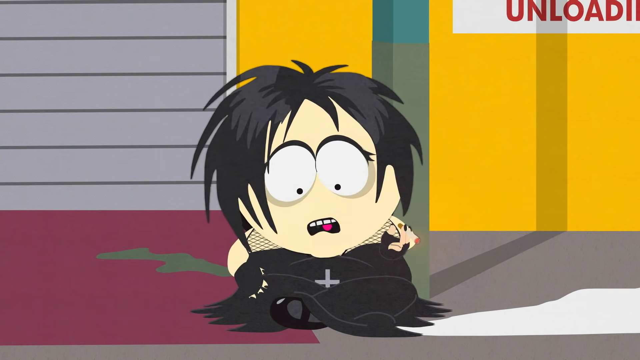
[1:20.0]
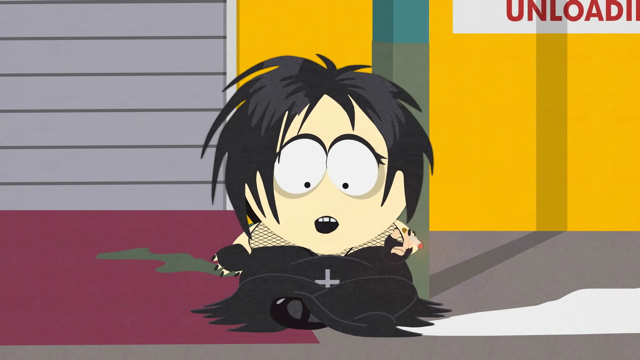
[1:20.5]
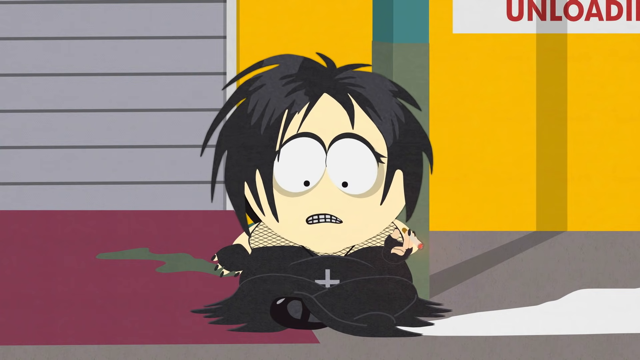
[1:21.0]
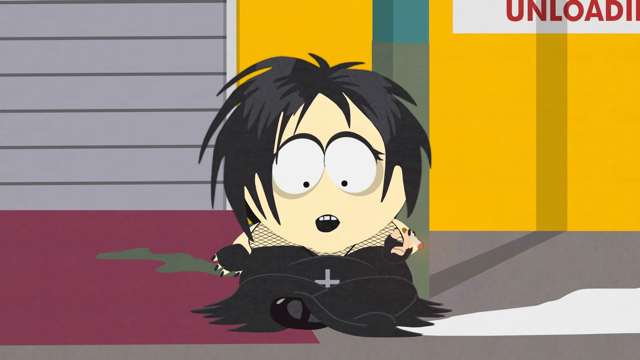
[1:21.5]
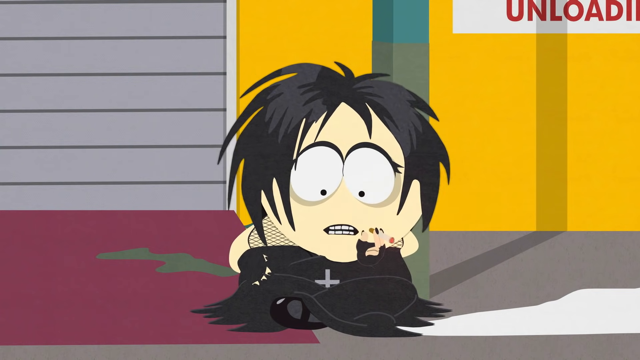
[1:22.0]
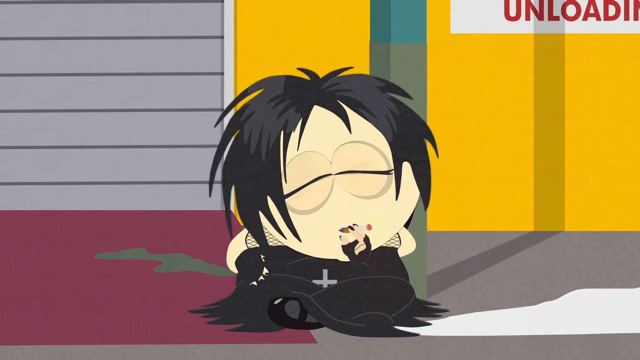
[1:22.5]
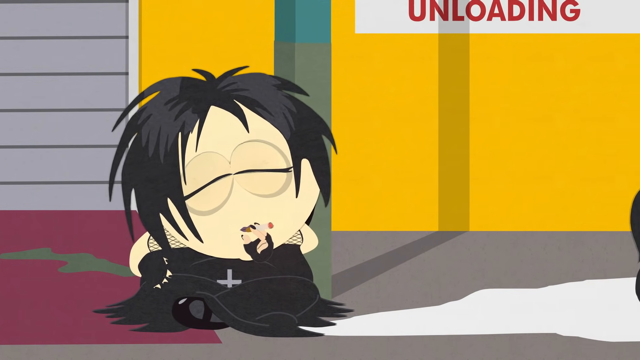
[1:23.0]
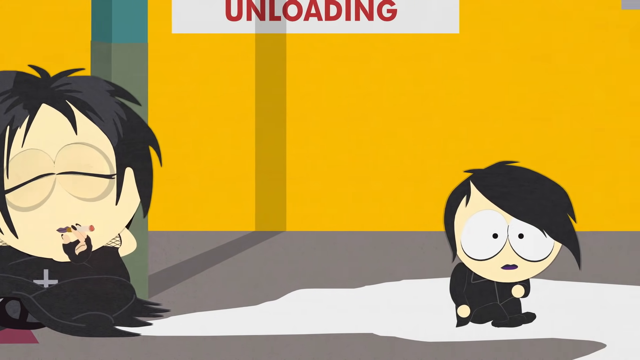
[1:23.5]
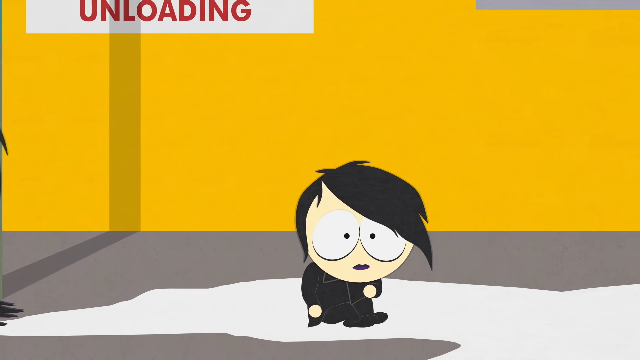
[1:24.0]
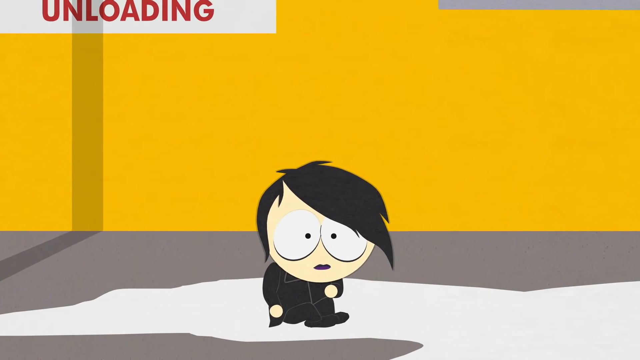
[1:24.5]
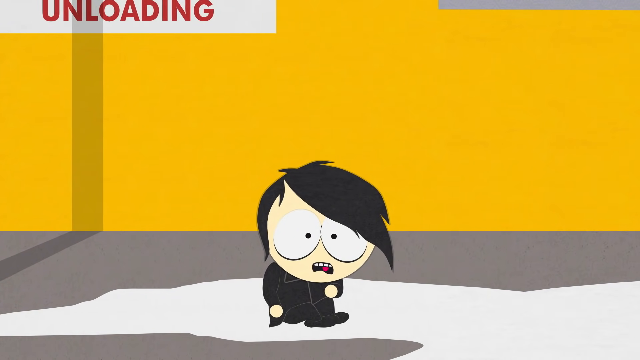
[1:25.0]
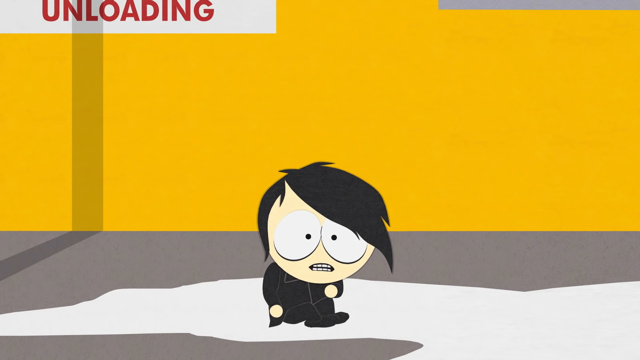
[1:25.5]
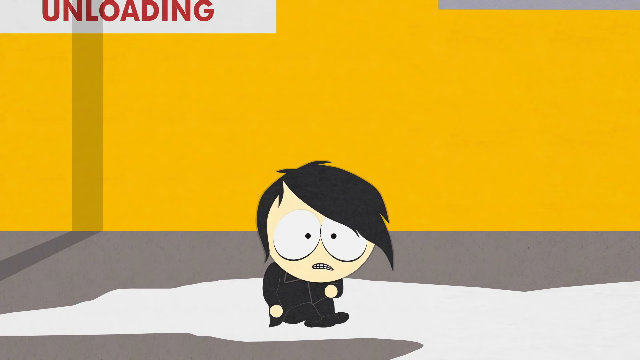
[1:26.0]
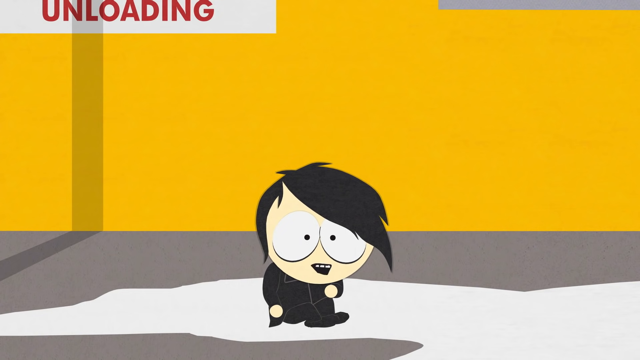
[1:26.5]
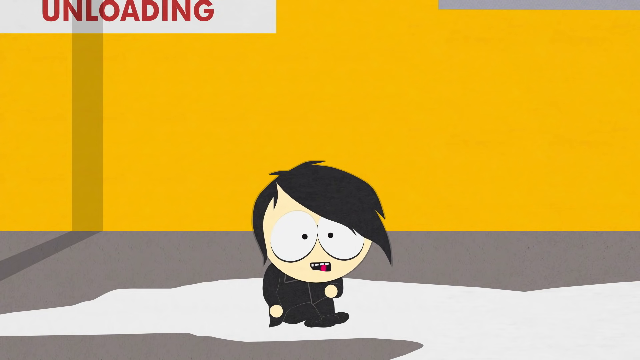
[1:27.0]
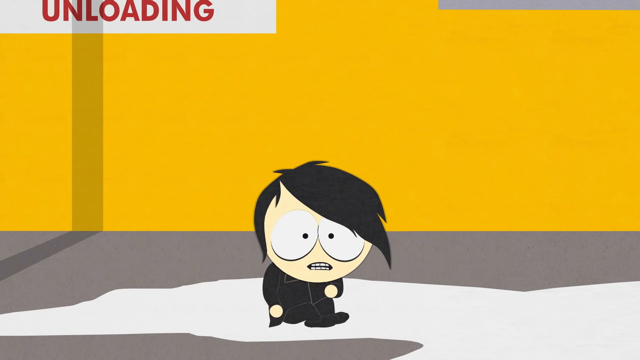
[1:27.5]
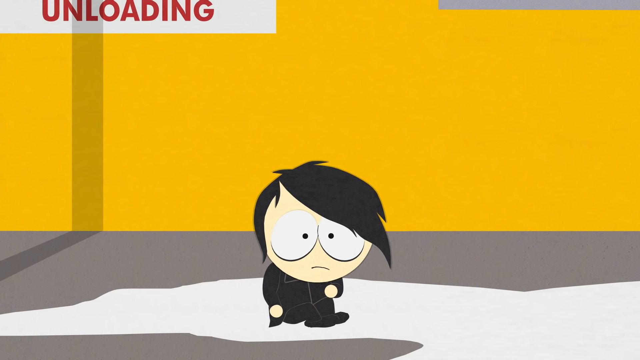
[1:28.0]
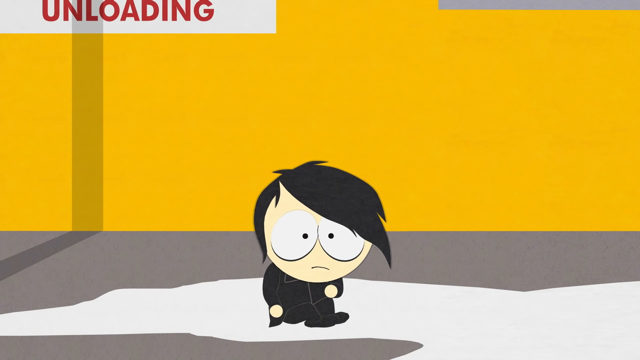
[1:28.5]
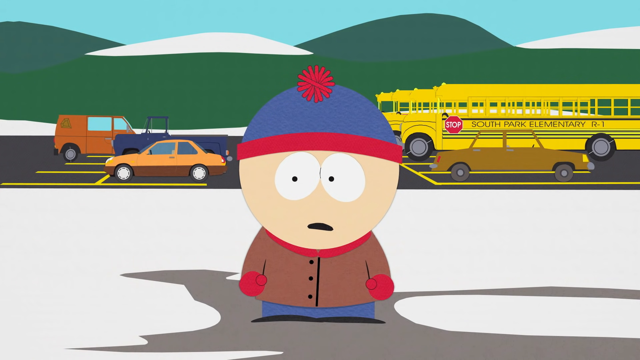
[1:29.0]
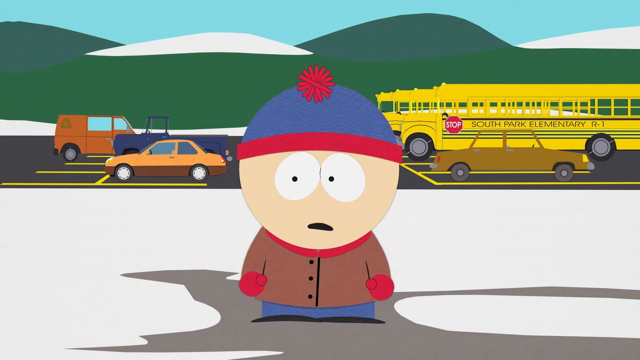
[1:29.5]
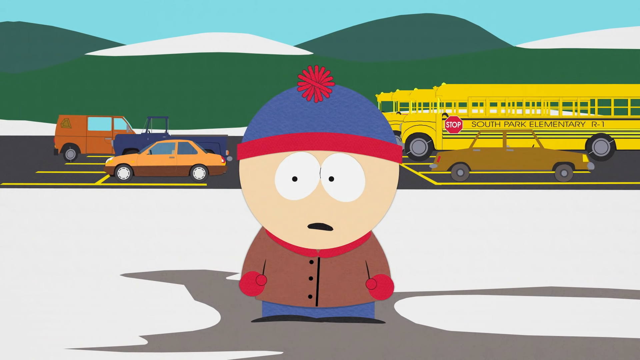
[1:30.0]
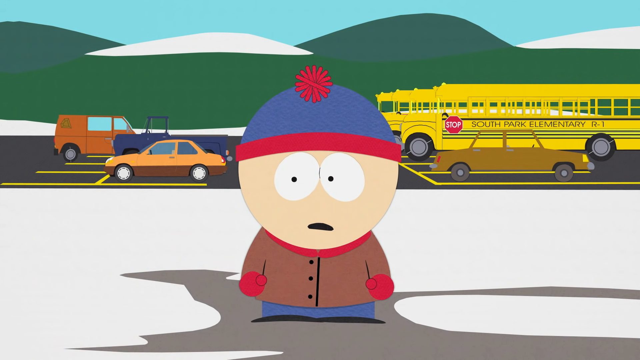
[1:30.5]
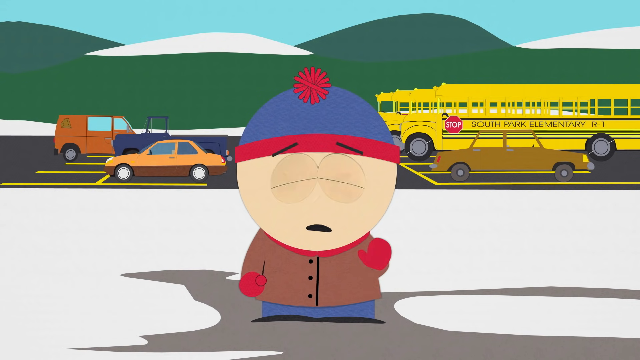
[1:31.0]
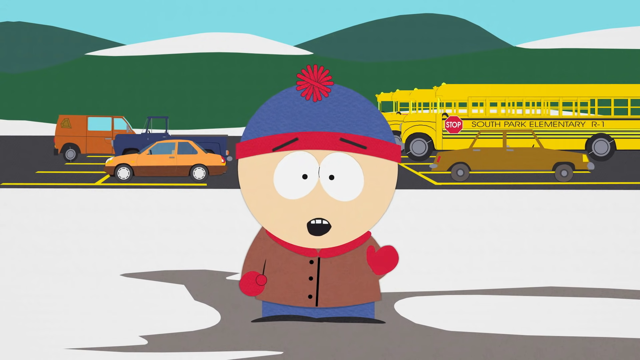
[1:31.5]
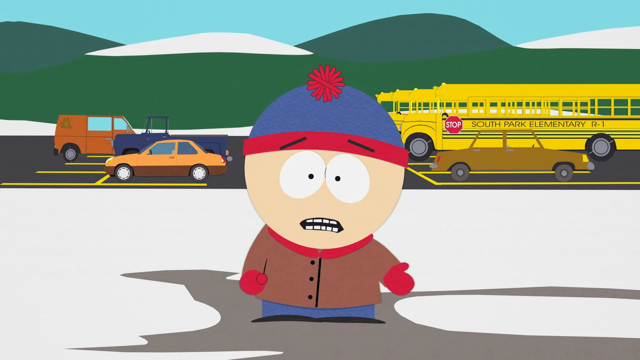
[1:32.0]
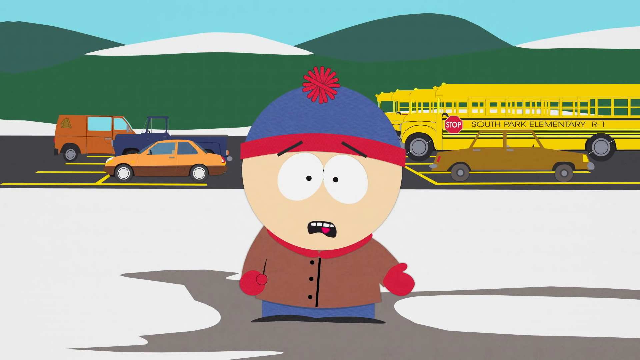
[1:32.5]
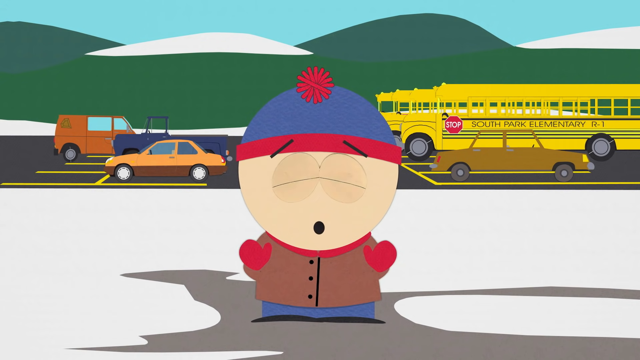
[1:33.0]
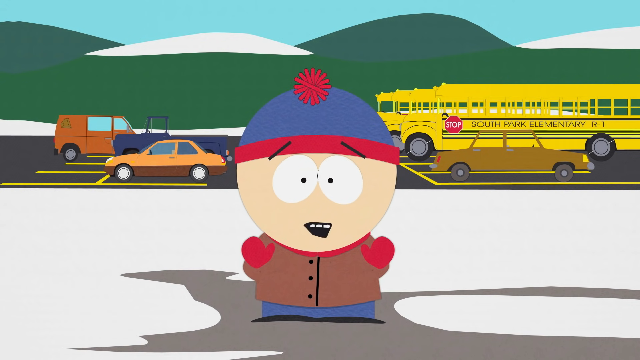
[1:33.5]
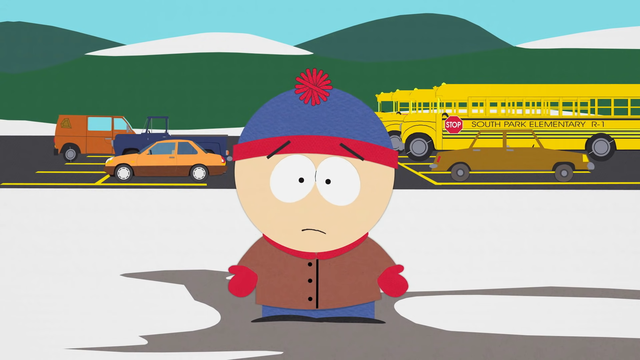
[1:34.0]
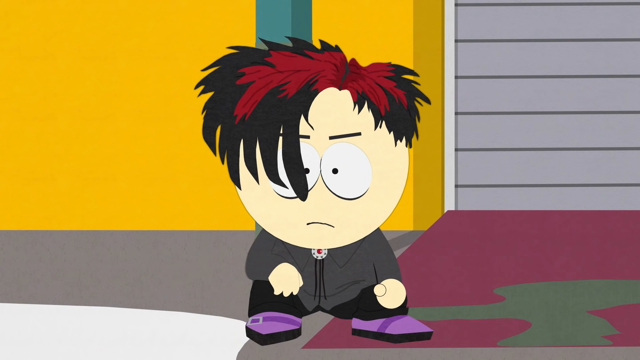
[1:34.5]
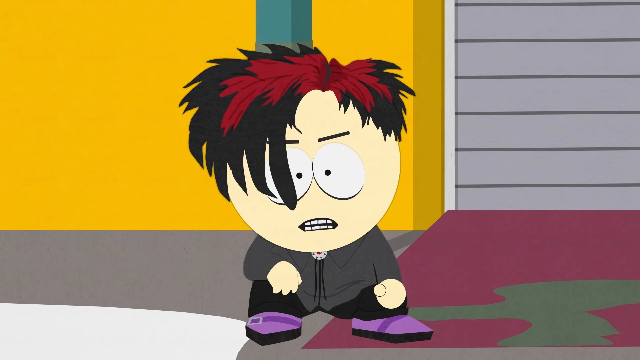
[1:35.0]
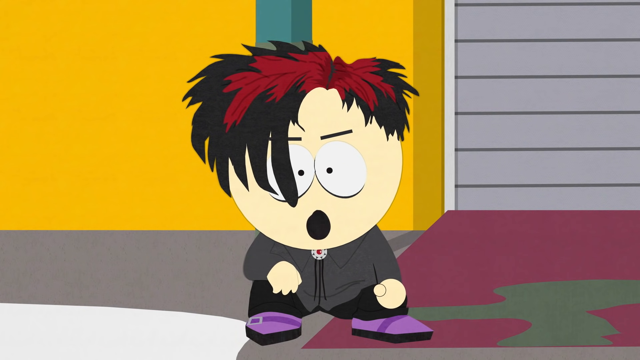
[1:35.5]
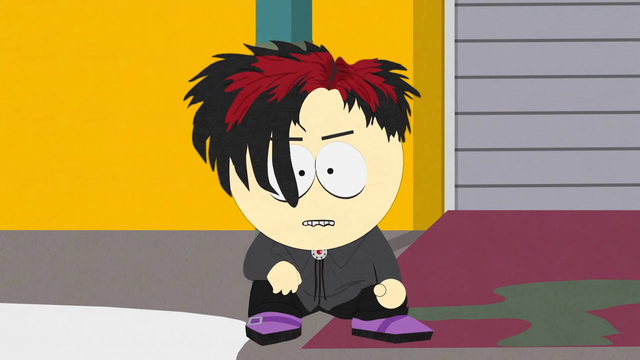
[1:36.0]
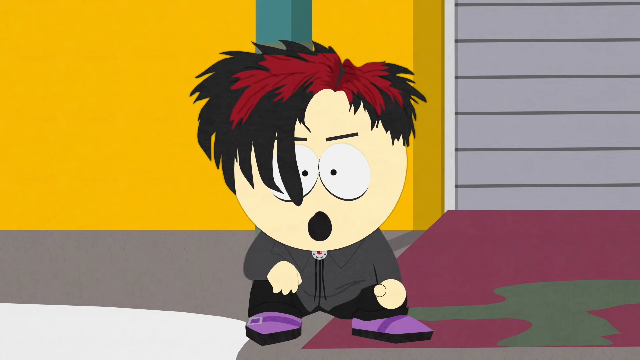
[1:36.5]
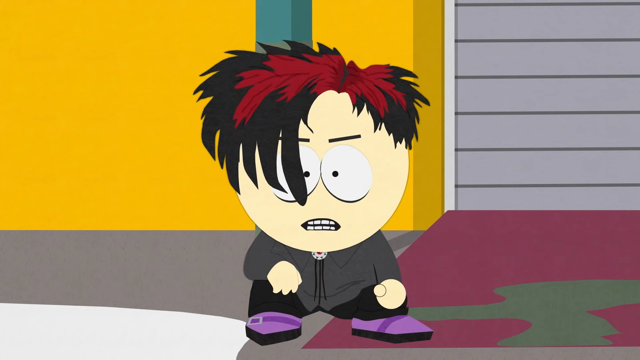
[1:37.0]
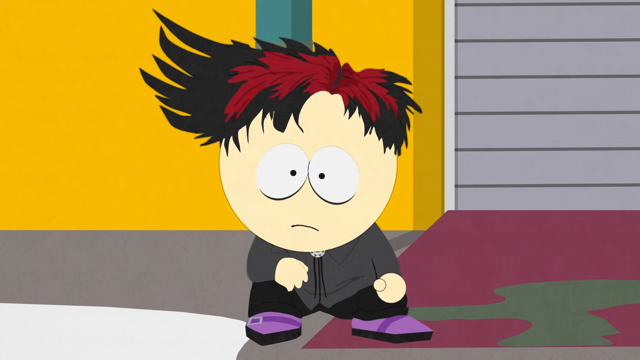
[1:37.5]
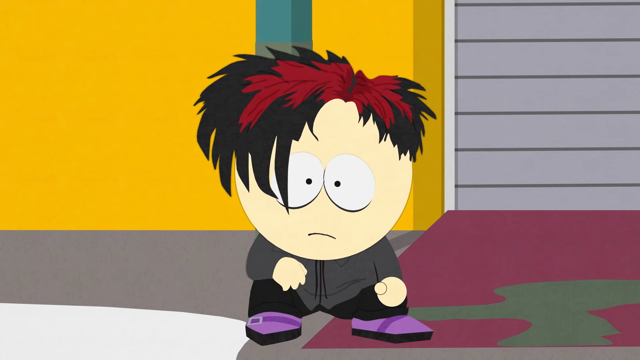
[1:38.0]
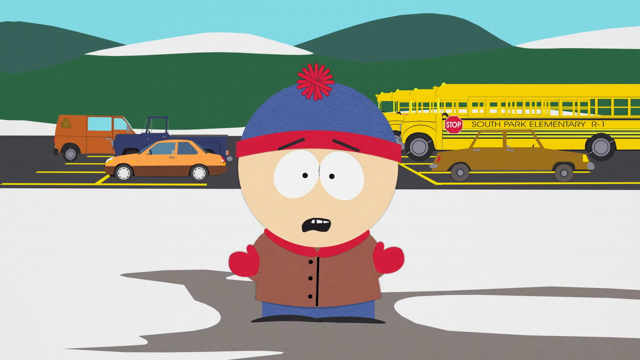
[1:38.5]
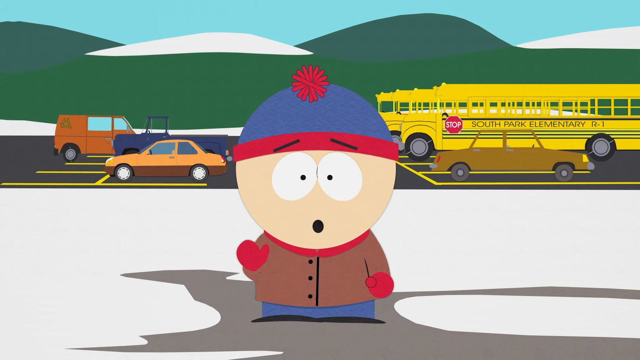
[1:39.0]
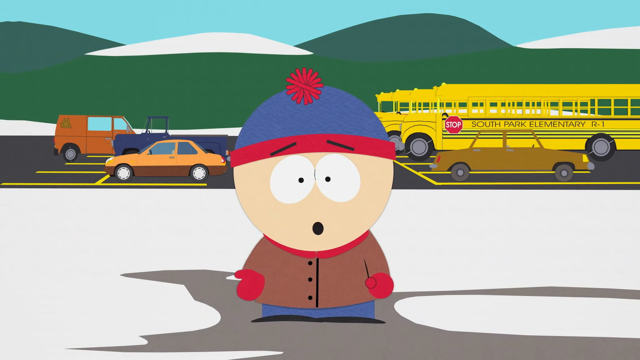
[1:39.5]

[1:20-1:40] The goth girl is sitting on the driveway, smoking and talking to her friends. The camera pans over to the small goth kid with the weird hair, who is very short compared to his friends. The goth kids are talking to Stan, and they are all kind of hanging out, smoking, talking, and socializing. Given the unloading sign, the location is possibly their school rather than a house. Stan apparently has come to them for some sort of advice; they seem to be having a conversation with him, and he is replying to them.